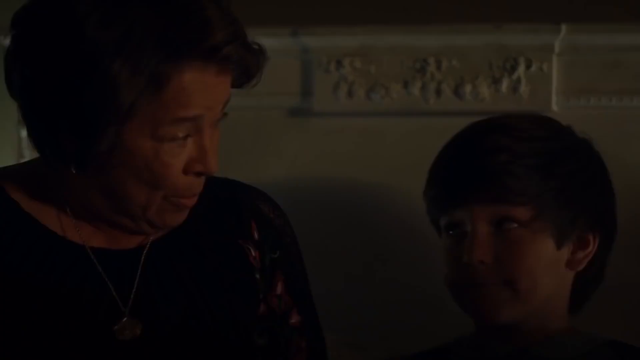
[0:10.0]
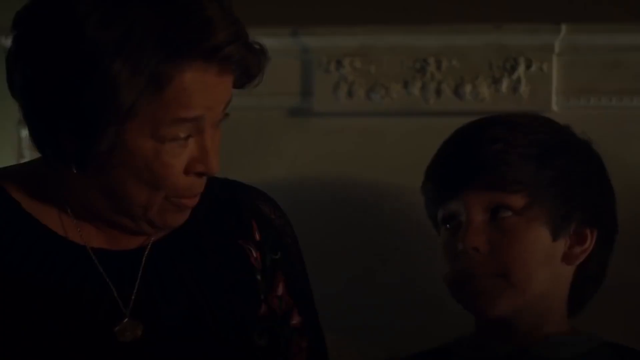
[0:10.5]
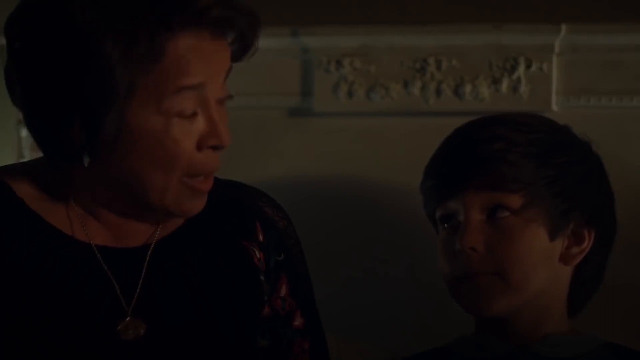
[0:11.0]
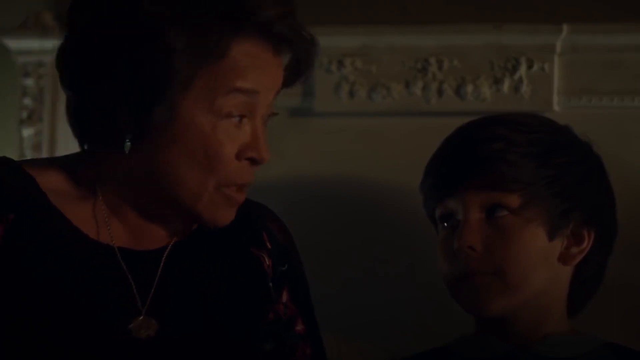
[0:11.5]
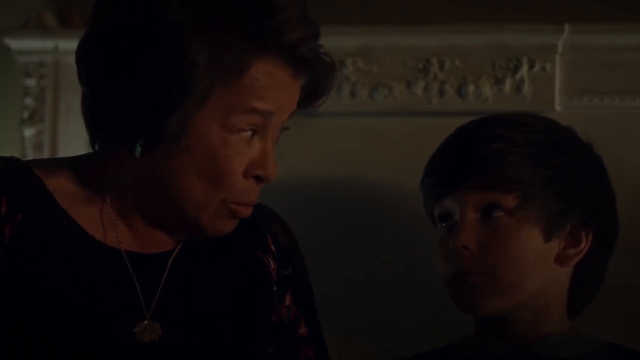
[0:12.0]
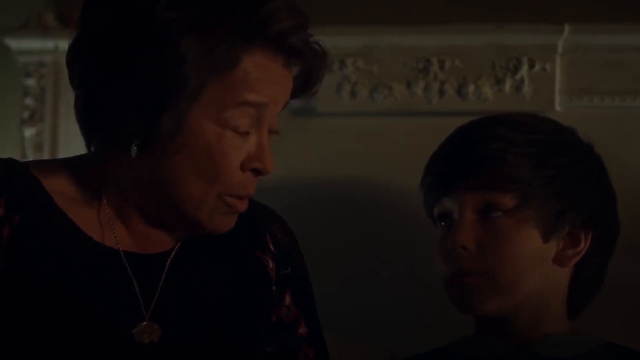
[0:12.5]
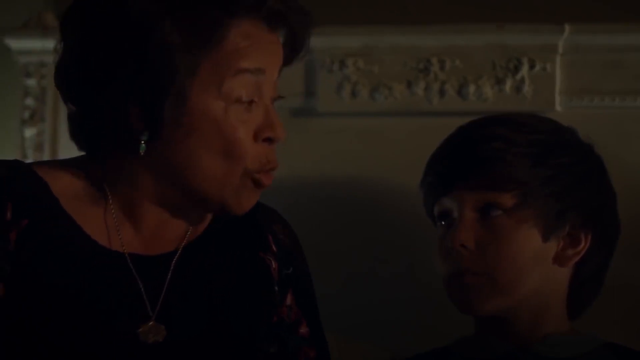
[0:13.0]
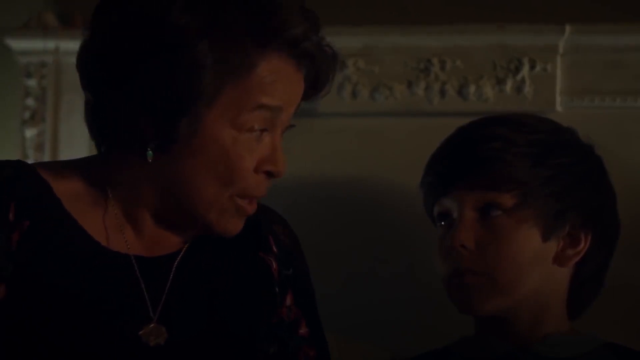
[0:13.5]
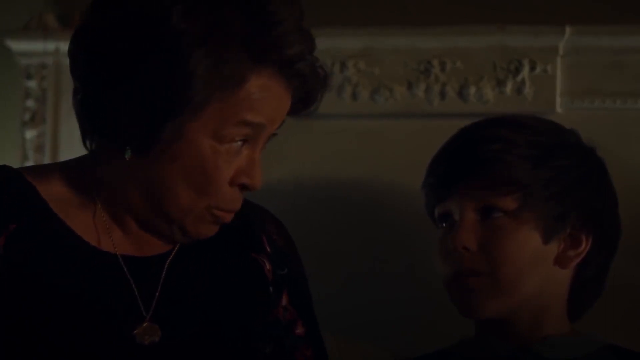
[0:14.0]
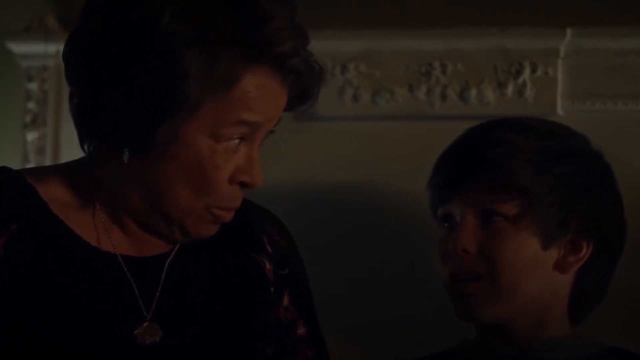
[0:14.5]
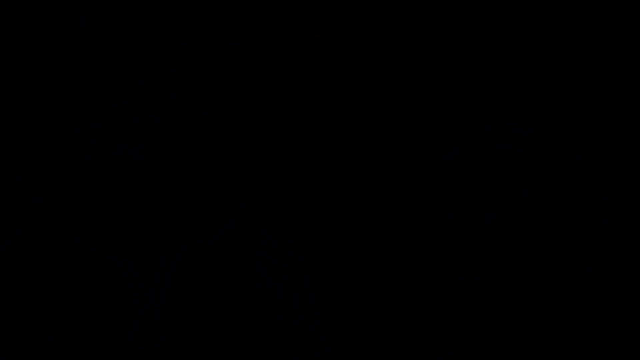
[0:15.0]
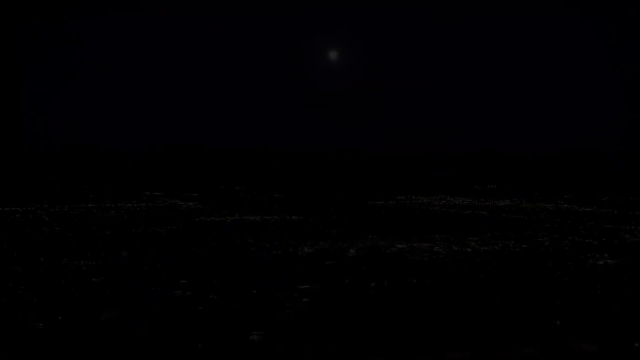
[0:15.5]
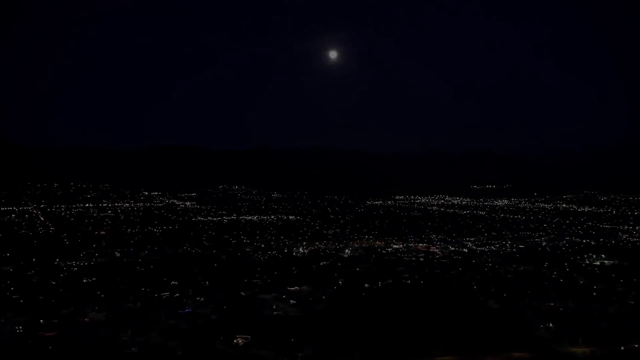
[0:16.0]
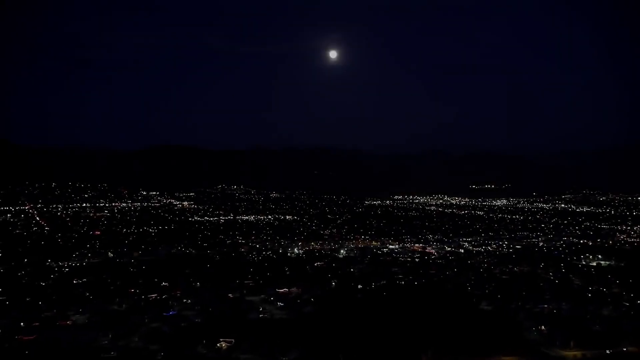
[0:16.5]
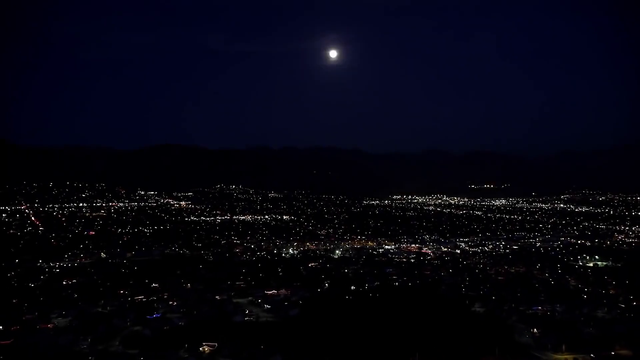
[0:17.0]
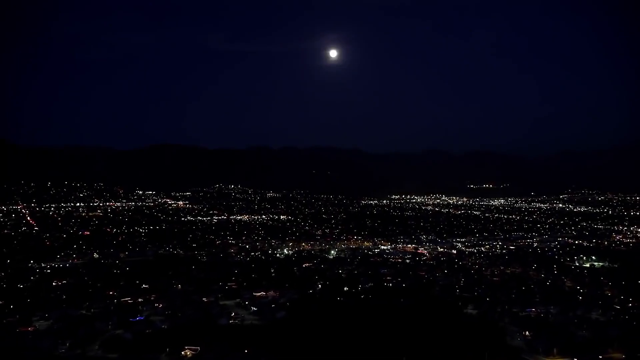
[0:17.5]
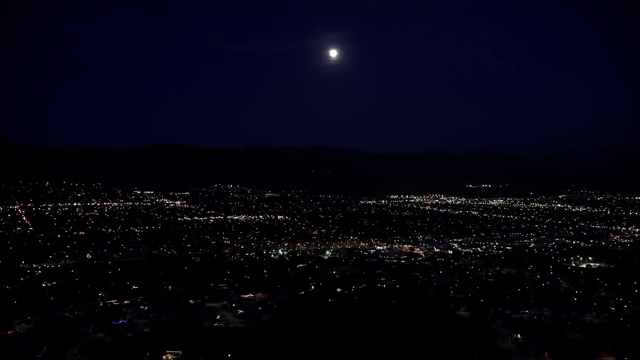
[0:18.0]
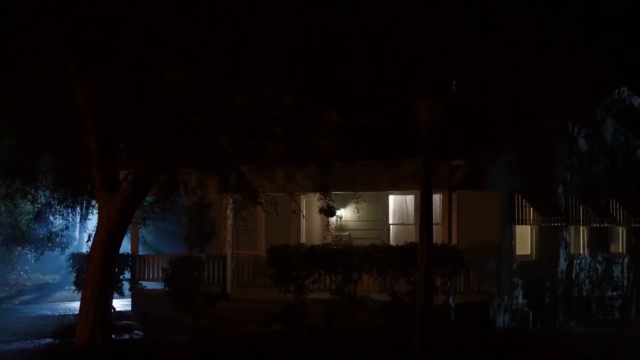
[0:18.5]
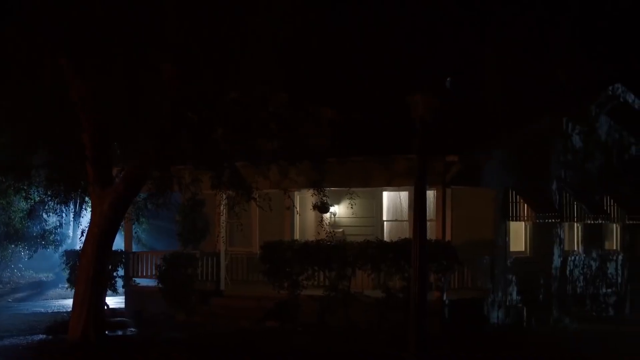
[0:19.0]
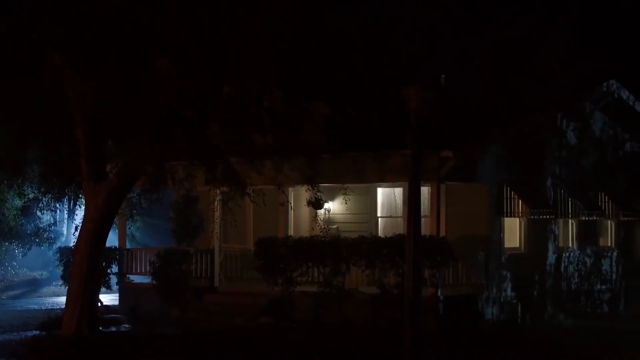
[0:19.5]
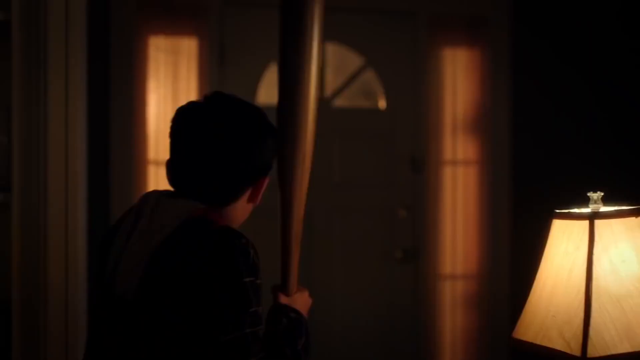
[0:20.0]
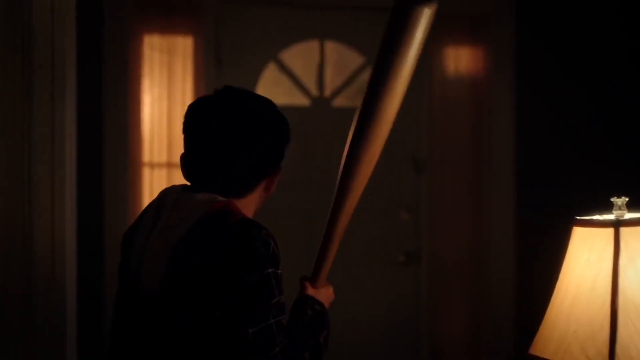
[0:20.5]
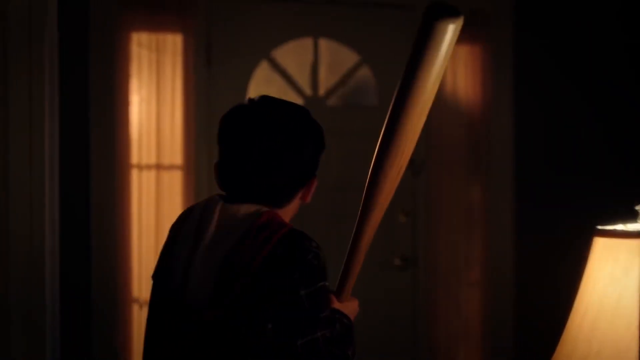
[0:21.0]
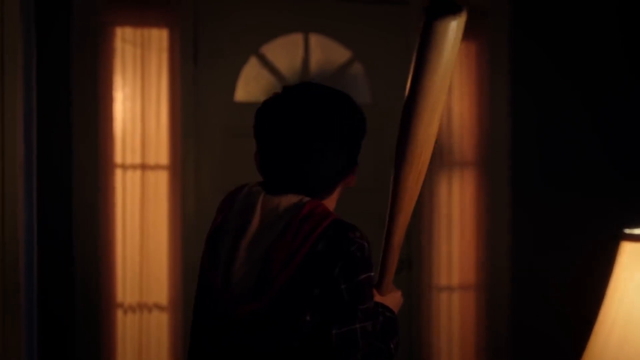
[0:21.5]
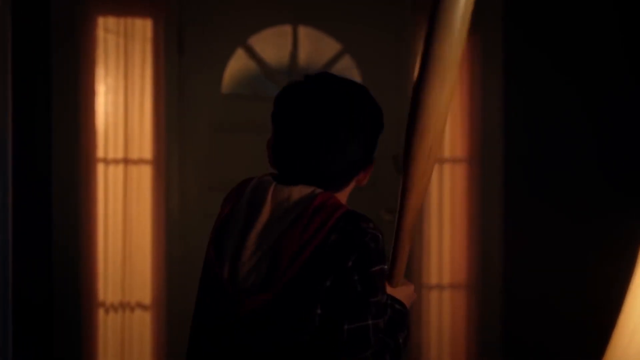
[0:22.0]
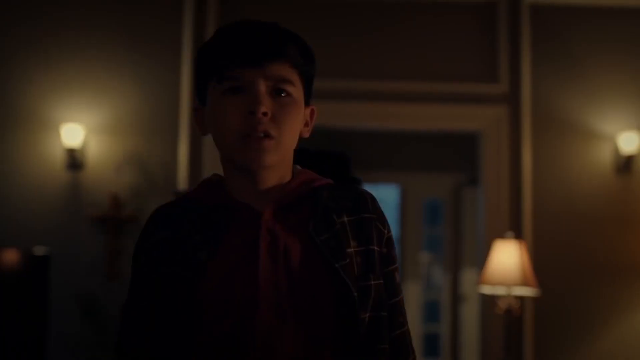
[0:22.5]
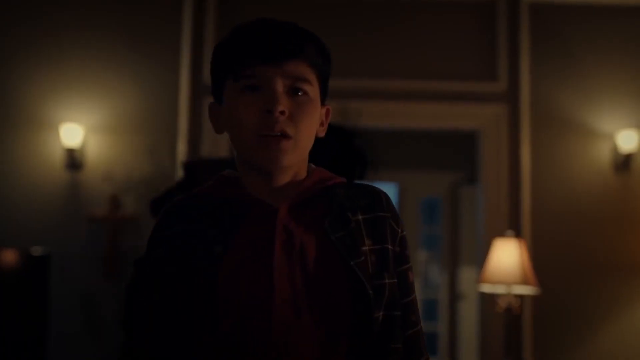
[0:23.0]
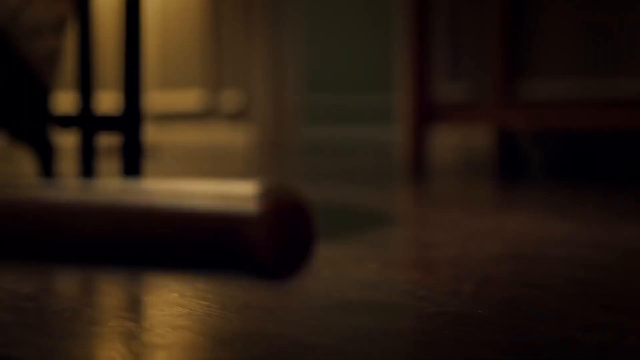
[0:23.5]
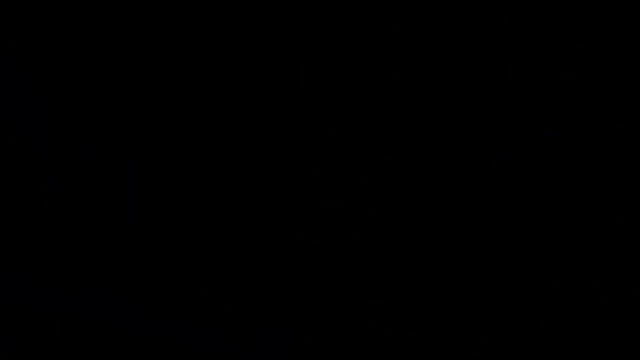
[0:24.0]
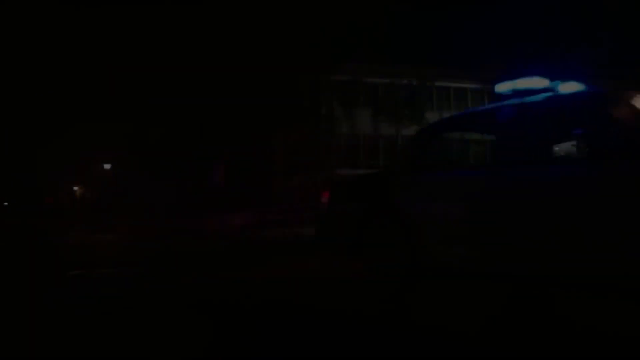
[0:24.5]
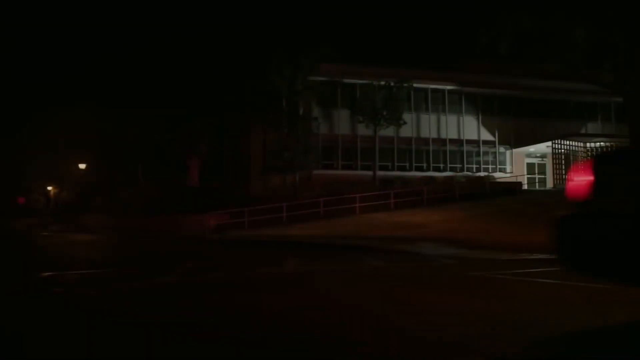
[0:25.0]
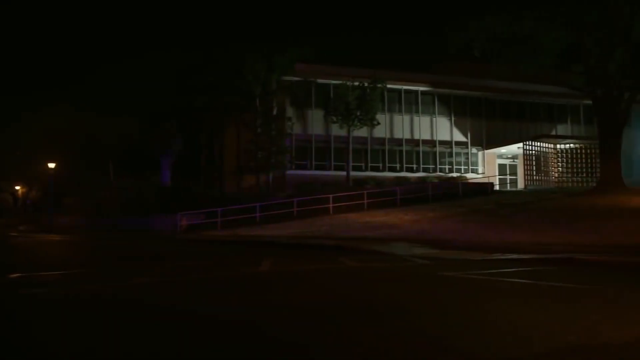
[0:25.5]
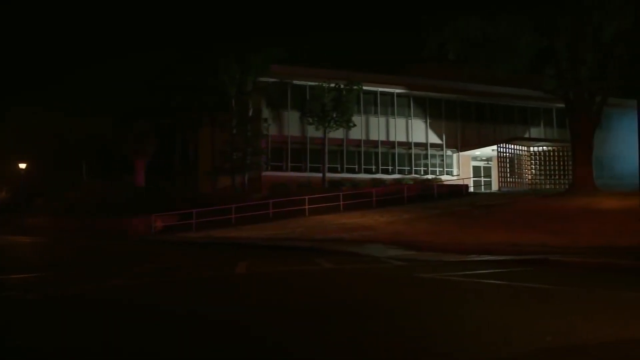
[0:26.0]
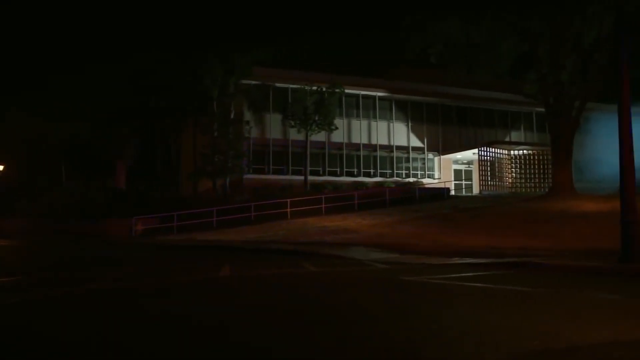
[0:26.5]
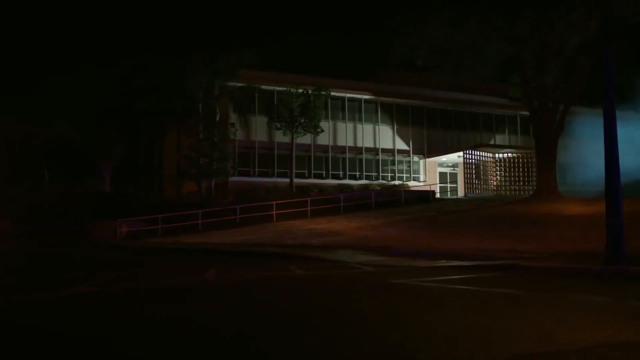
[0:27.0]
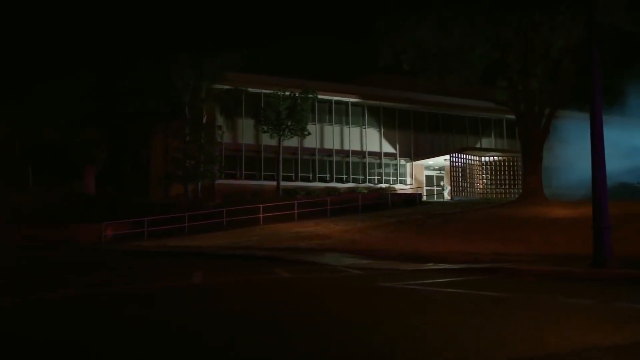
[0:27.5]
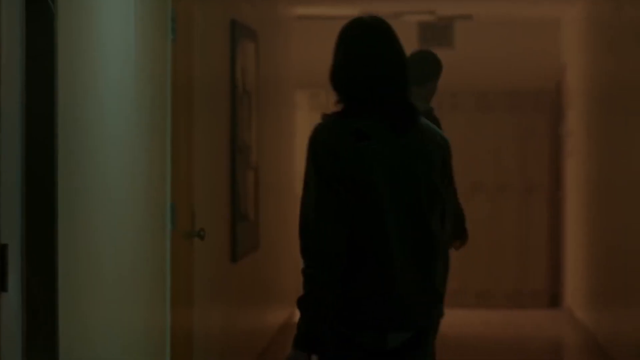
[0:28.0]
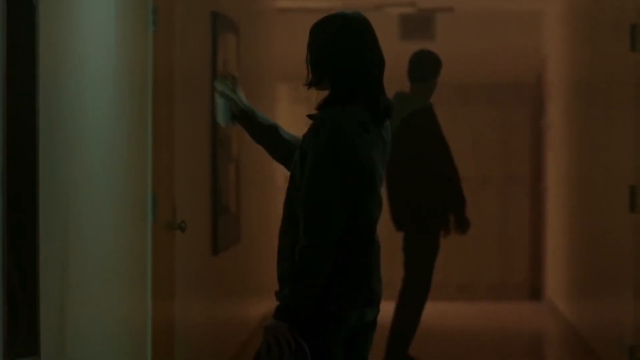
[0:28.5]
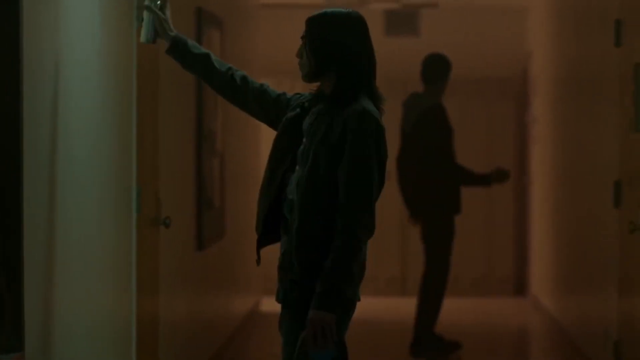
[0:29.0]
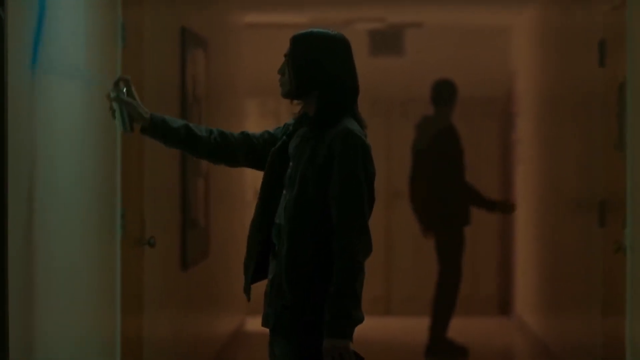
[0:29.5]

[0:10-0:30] An older lady with graying short hair and a necklace around her neck looks toward her left side at a young boy with medium-length hair seated next to her. The boy's eyes are rolled up, looking at the woman. They have a conversation in front of a white wall, and the woman leans her head toward the boy as she starts talking to him, moving her head up and down. The scene changes to an aerial view of a city at night, with the lights from the buildings scattered across the screen and a brightly lit full moon in the sky above. Next comes a nighttime scene in front of a house with a porch light on, windows lit up by light from inside, and a giant tree in front of the house. Inside the house, a boy carrying a baseball bat in both hands approaches the front door; a shadowy figure is visible on the other side of the door outside, with bright orange light. The boy drops the bat and it hits the ground. A police car with its red and blue lights on then drives from left to right across the screen, away from the police station.